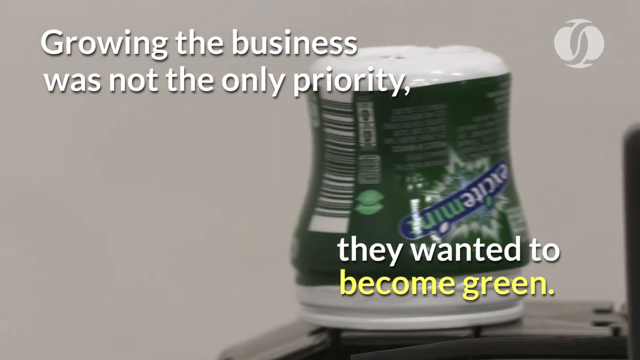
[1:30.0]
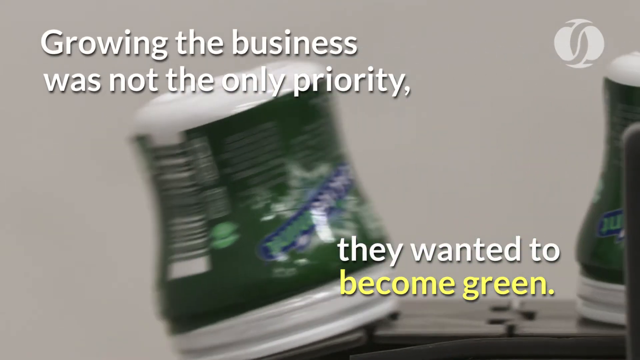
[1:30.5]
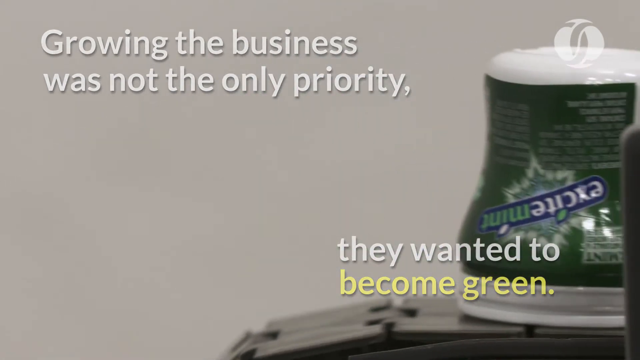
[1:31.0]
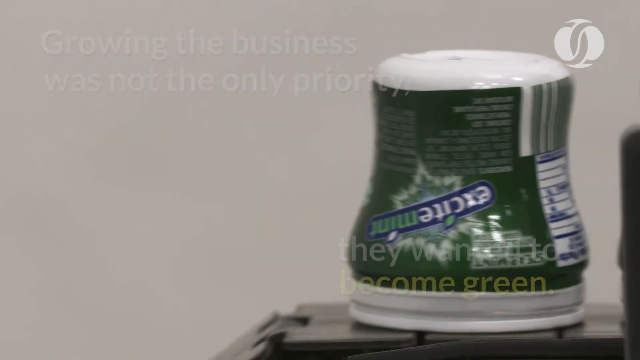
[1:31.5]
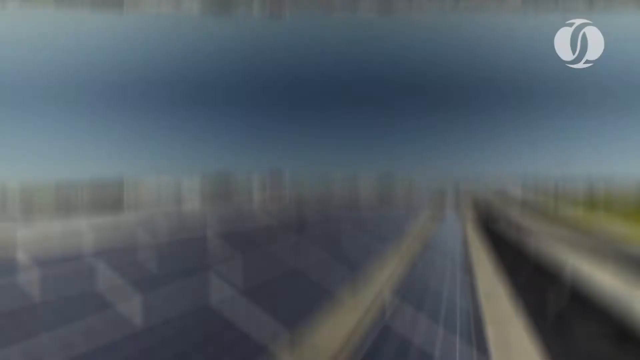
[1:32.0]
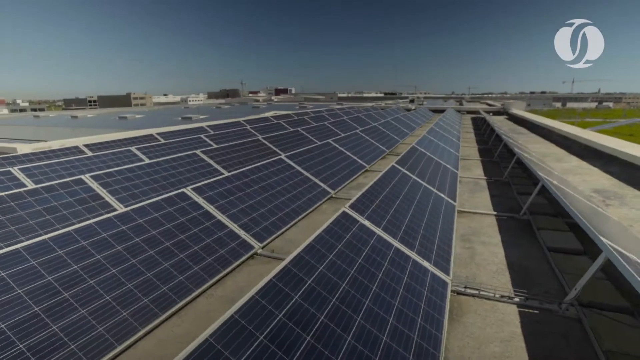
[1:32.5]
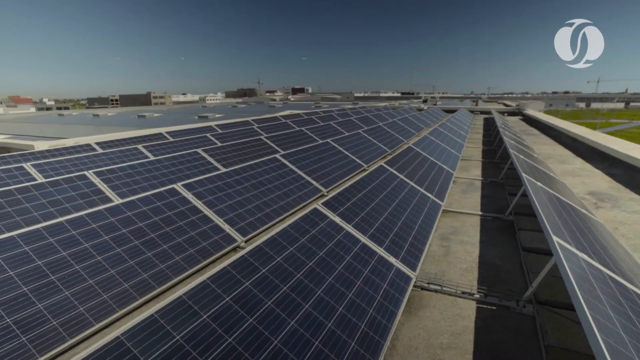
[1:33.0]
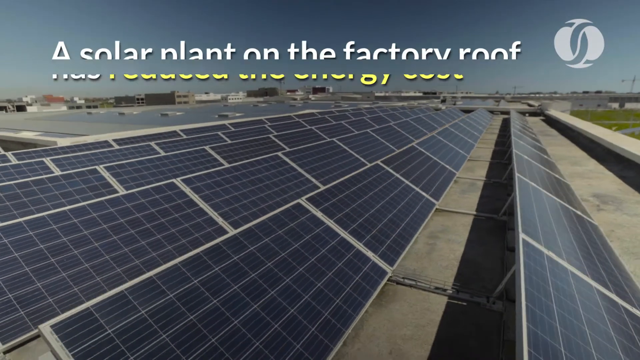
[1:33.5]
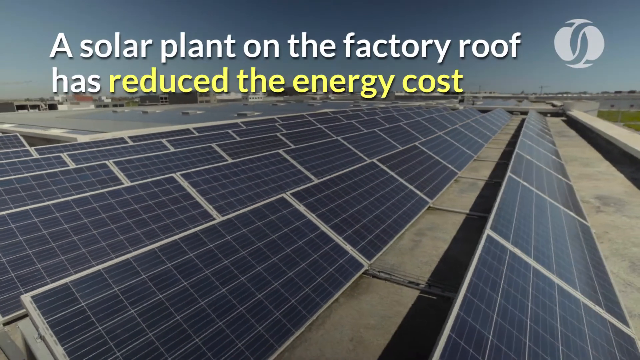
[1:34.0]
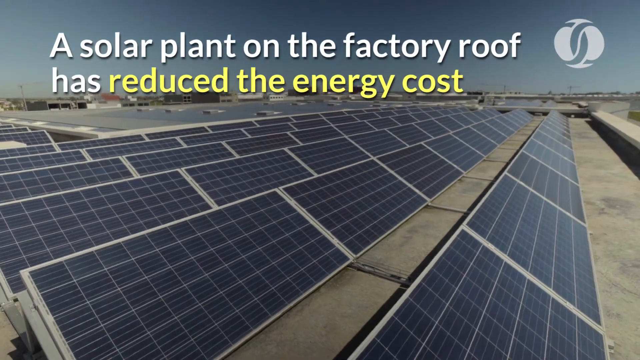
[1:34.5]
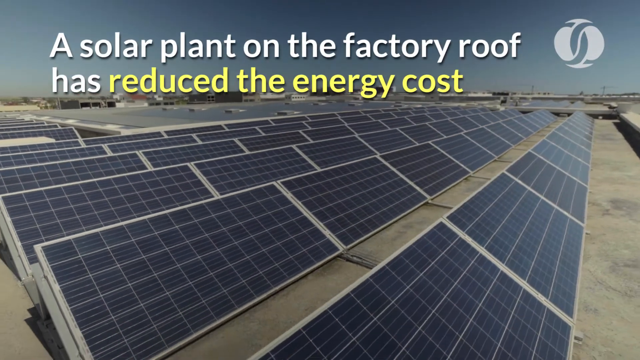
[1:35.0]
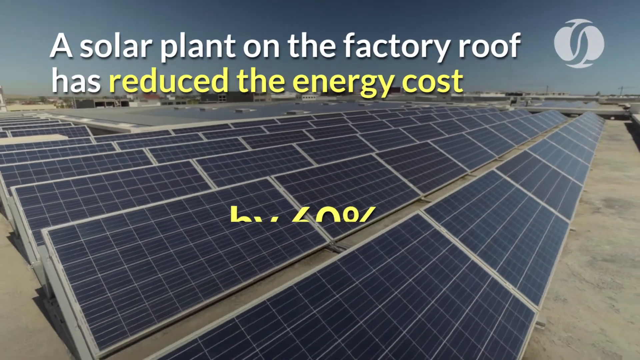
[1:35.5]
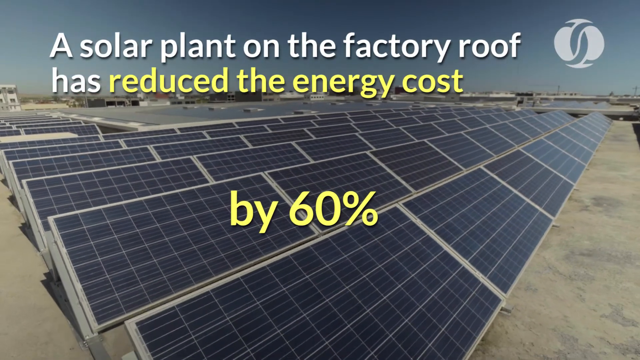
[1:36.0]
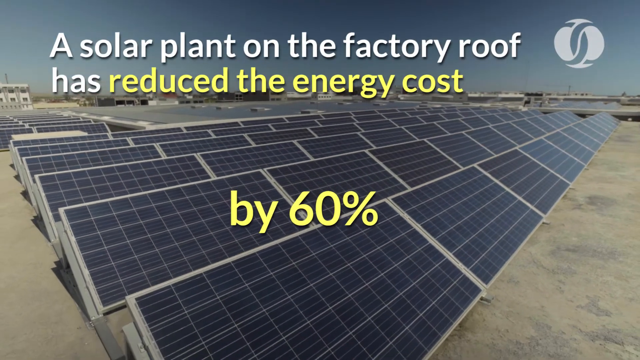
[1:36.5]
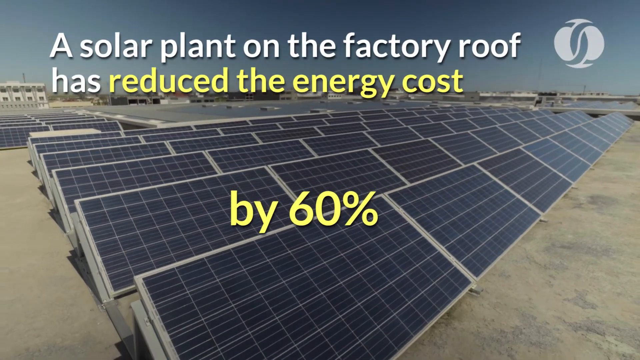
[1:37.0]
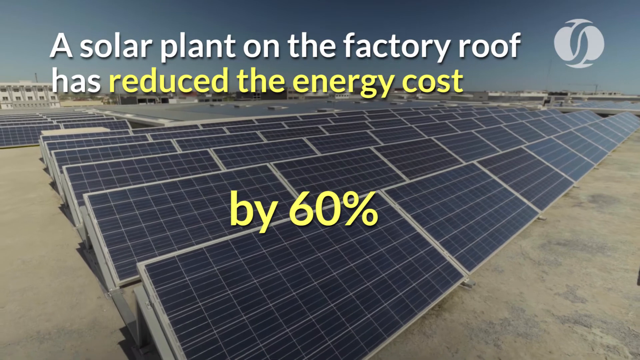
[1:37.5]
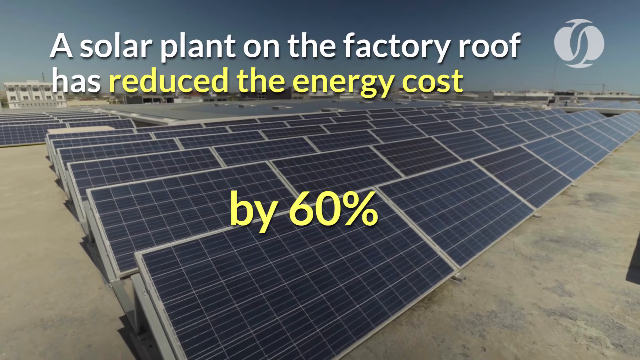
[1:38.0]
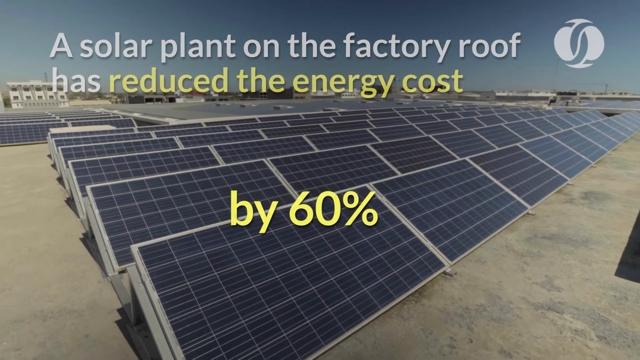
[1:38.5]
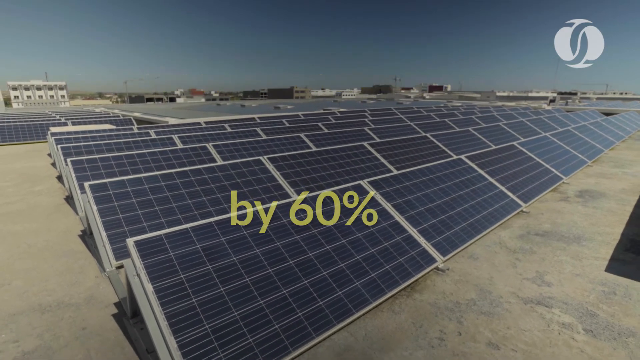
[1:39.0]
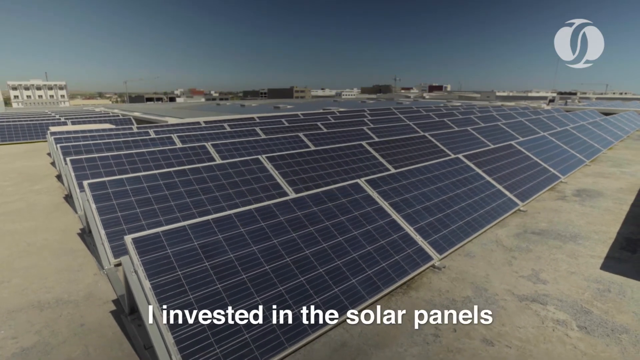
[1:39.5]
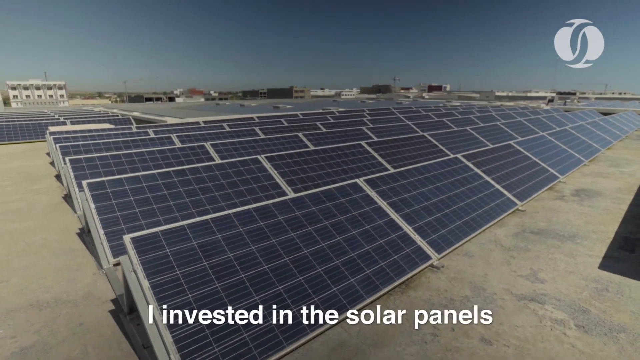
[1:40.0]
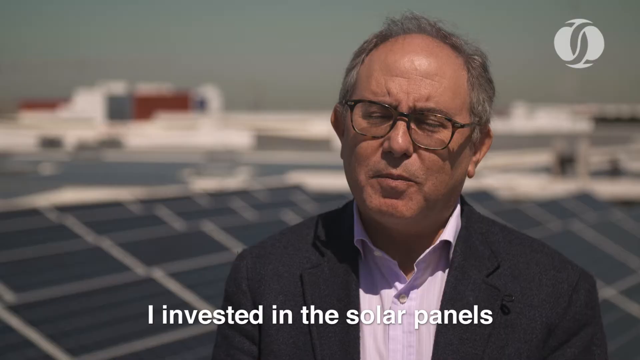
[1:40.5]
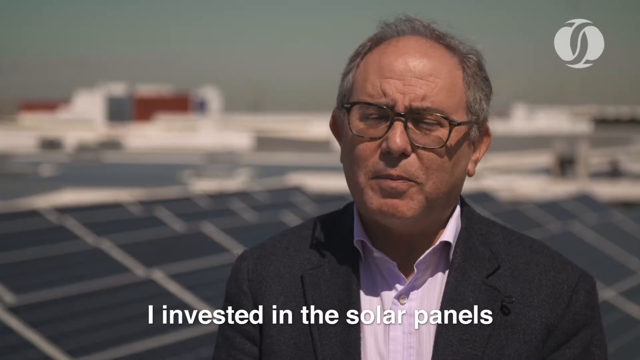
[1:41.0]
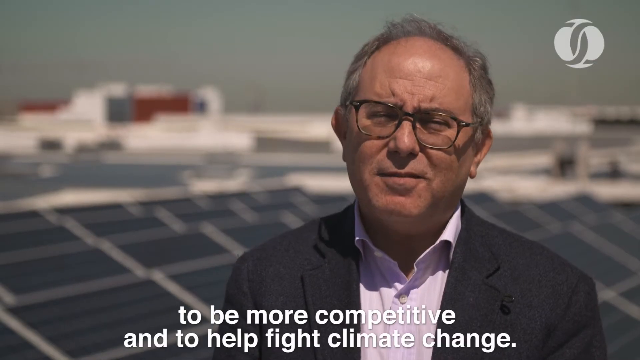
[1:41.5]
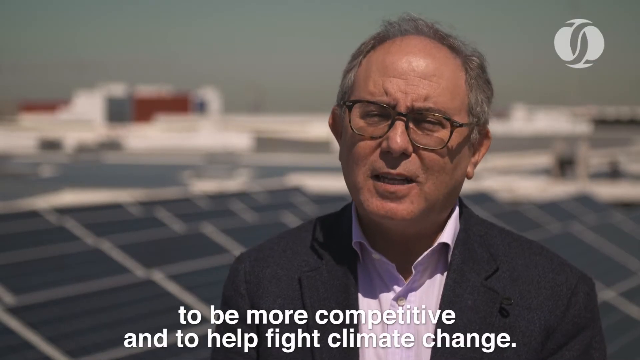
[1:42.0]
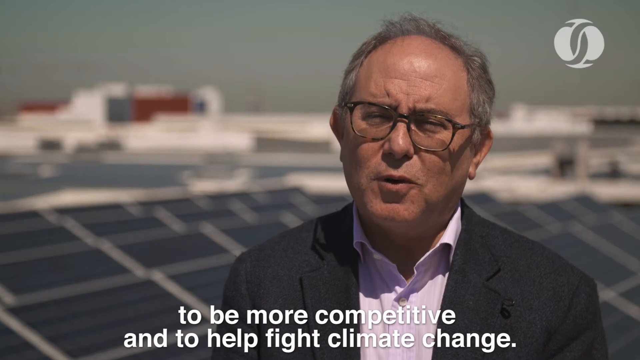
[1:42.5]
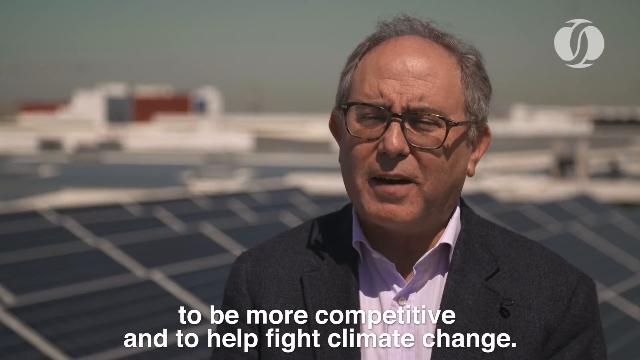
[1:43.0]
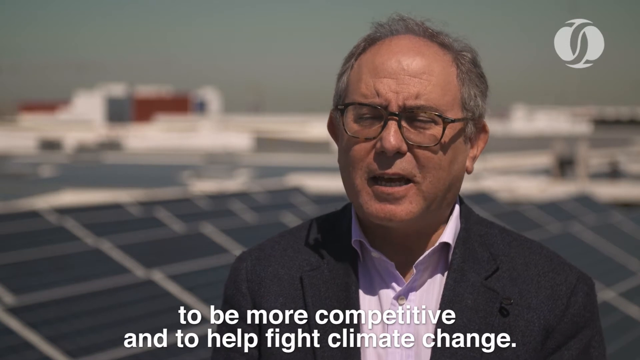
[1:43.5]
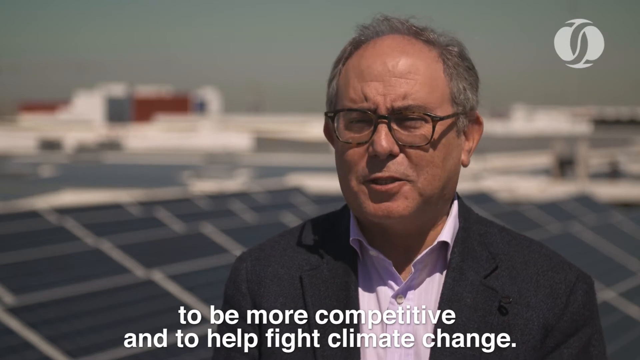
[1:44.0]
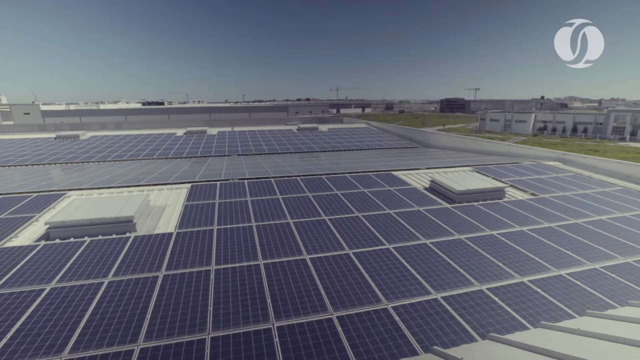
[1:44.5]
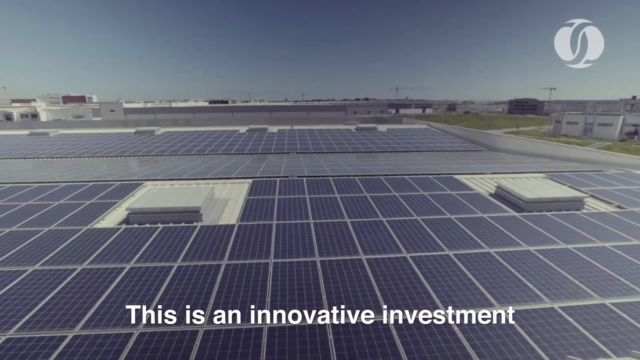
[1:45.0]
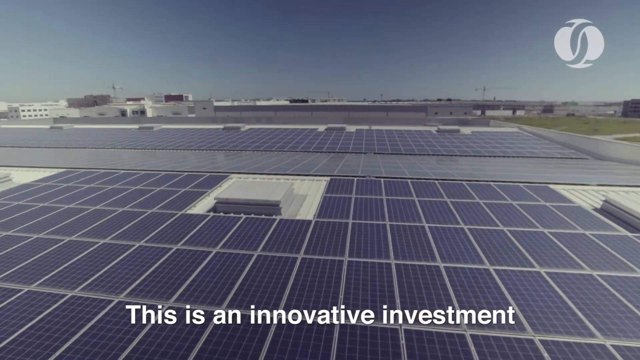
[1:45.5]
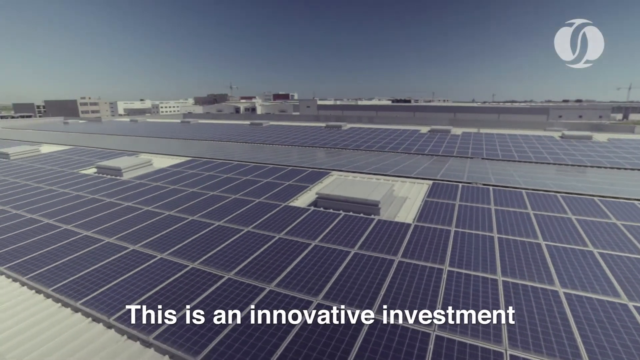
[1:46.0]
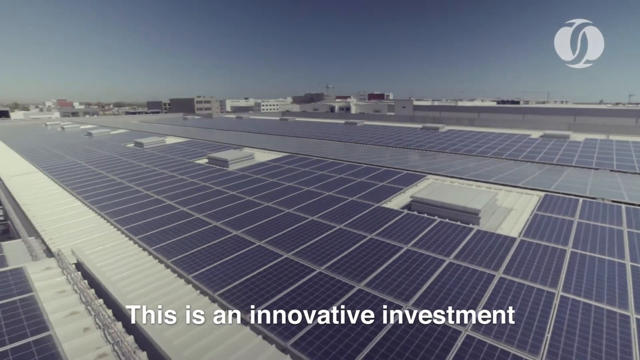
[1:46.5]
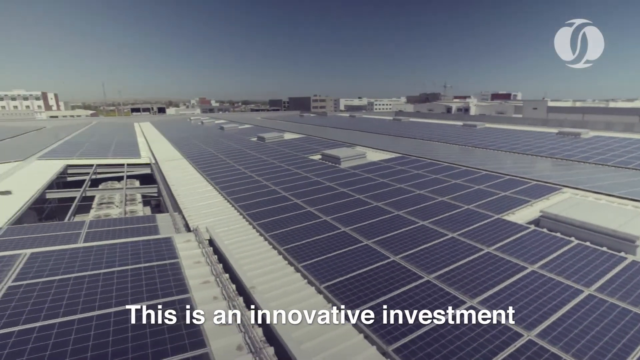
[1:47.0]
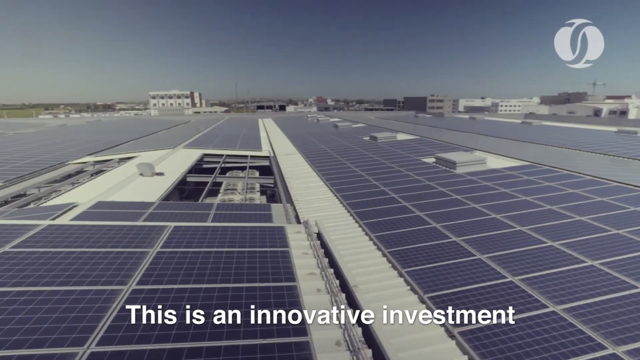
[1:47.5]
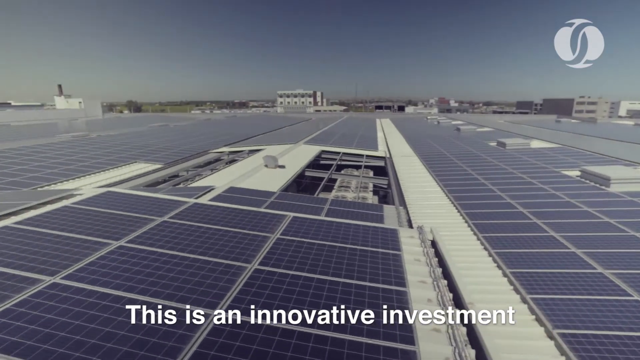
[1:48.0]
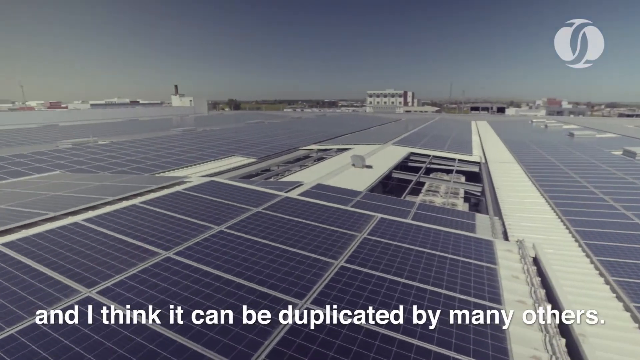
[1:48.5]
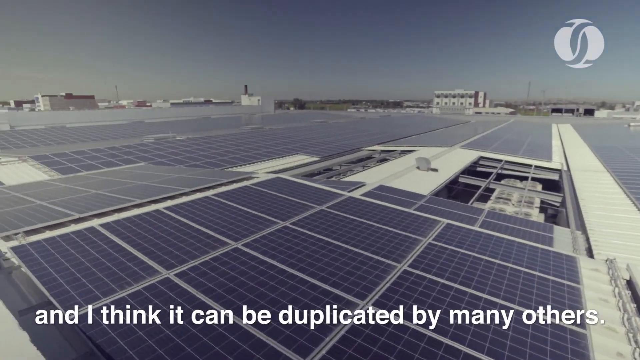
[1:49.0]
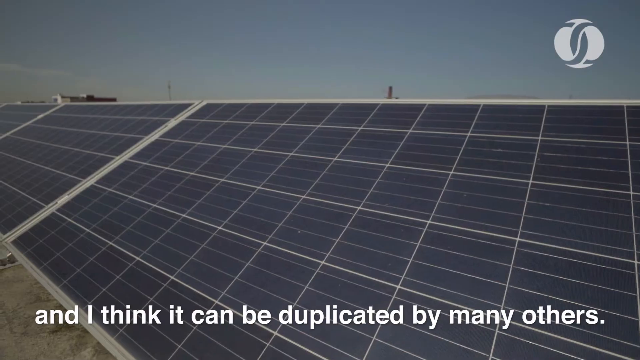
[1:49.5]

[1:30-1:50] The text "Growing the business was not the only priority" appears with a green gum case that has a white top, against a gray background, with "become green" in green letters. Text reads "a solar plant on the factory roof has reduced the energy cost by 60%" and "I invested in the solar to be more competitive and to help fight climate change. This is an innovative investment, and I think it can be duplicated by many others." Dark green, mint-colored gum and a forest-green case of the gum are shown being made. Black solar panels with little squares in them are shown, along with the sky. The man, wearing black glasses, talks outside.